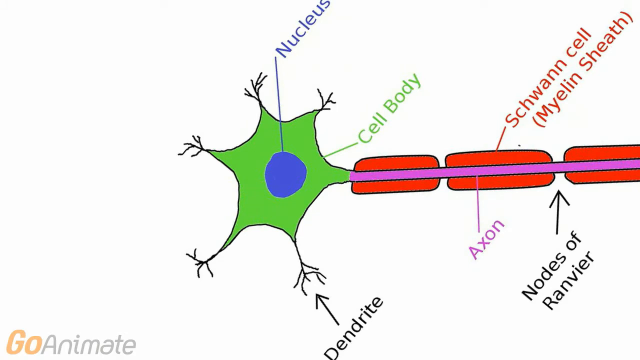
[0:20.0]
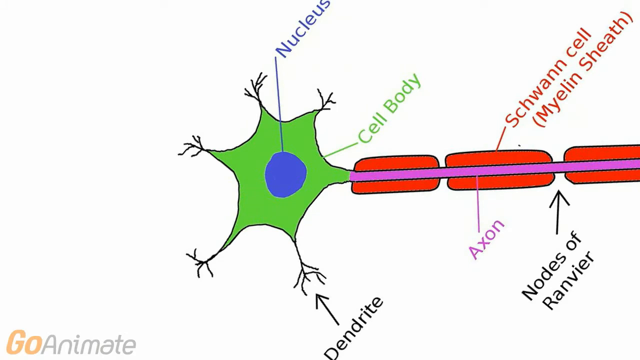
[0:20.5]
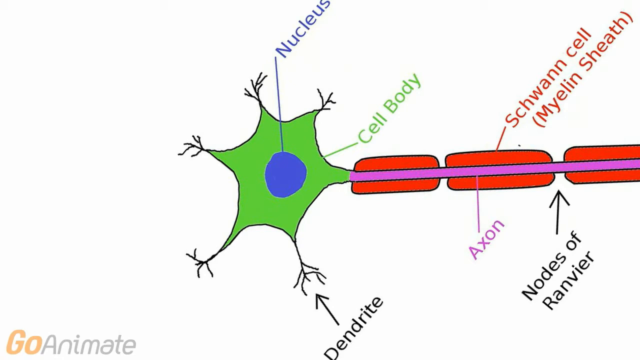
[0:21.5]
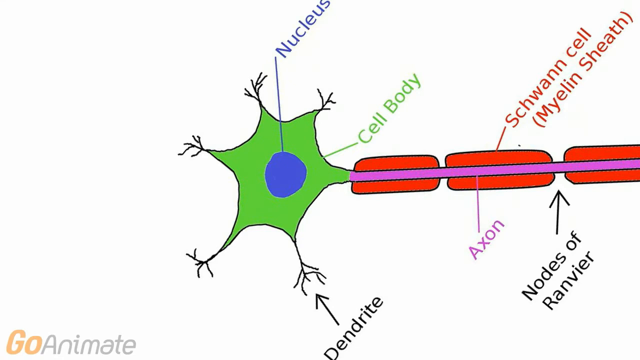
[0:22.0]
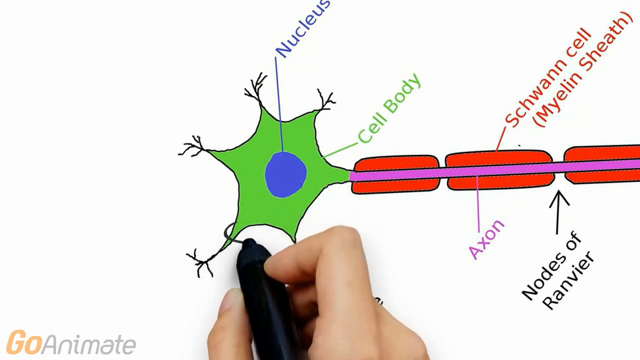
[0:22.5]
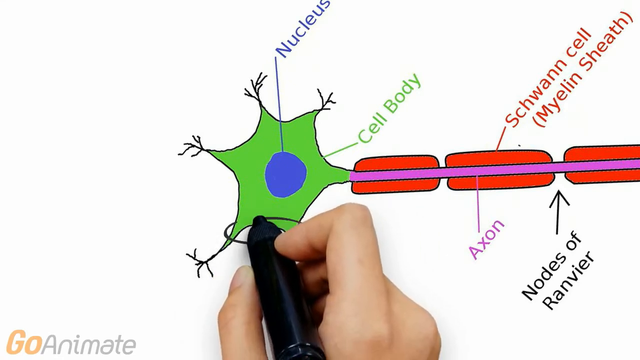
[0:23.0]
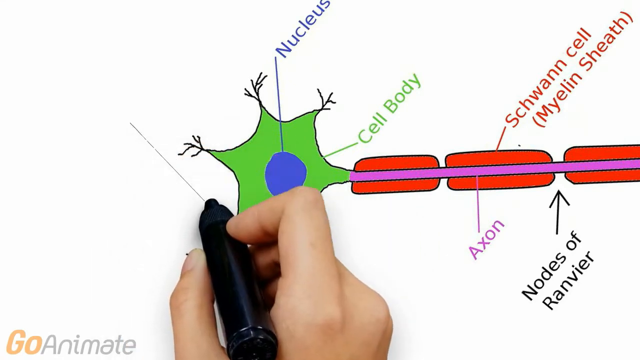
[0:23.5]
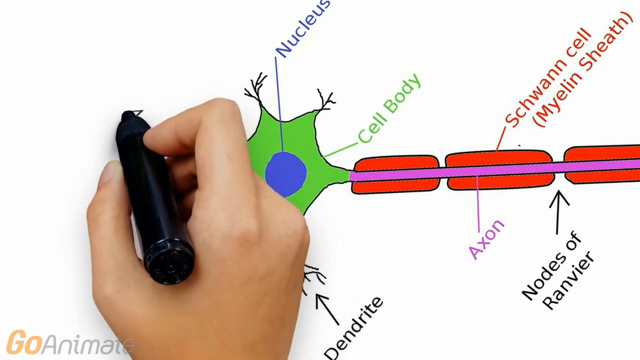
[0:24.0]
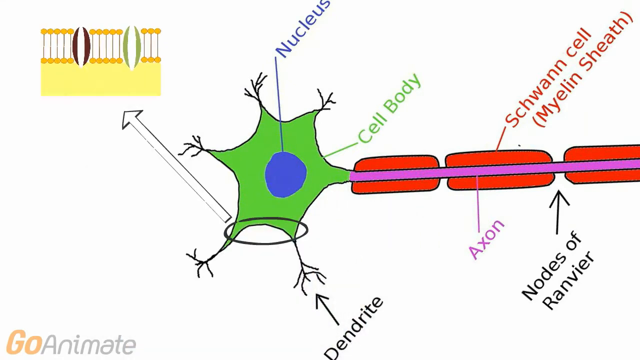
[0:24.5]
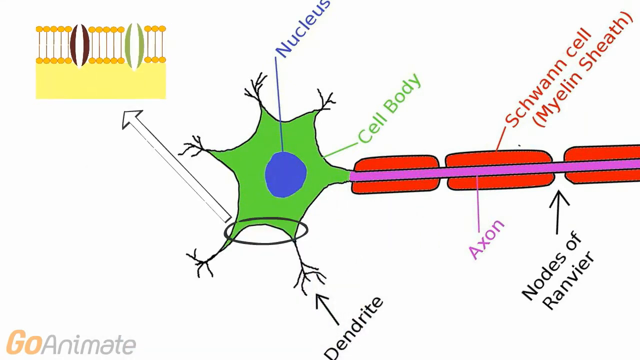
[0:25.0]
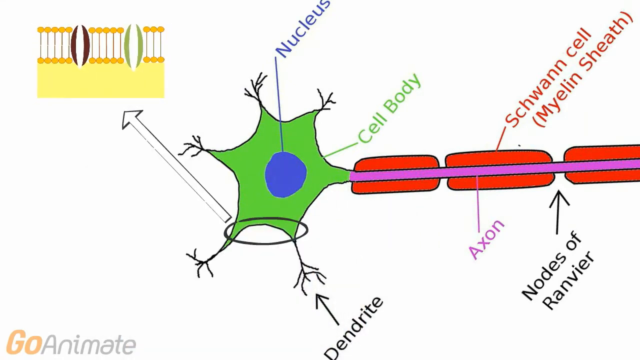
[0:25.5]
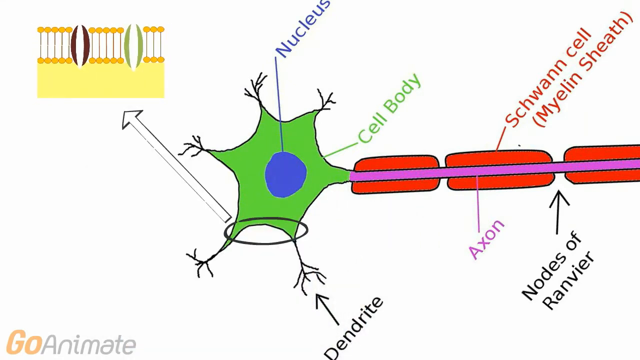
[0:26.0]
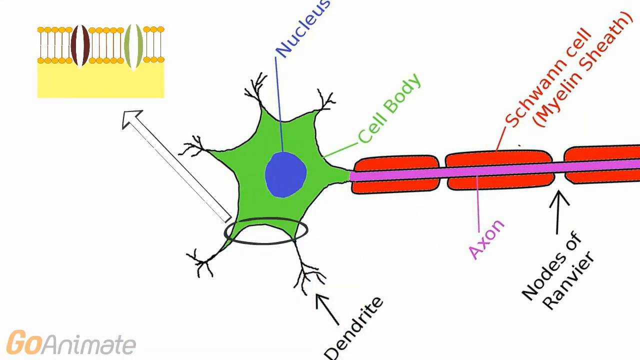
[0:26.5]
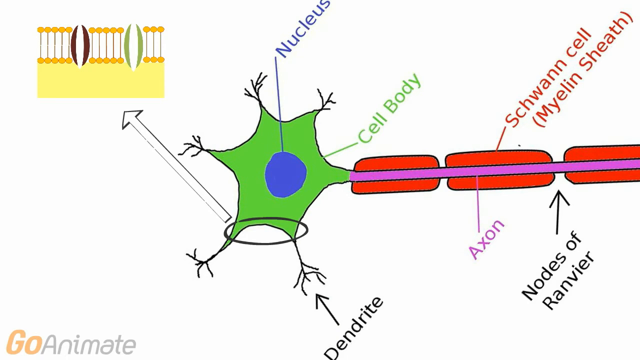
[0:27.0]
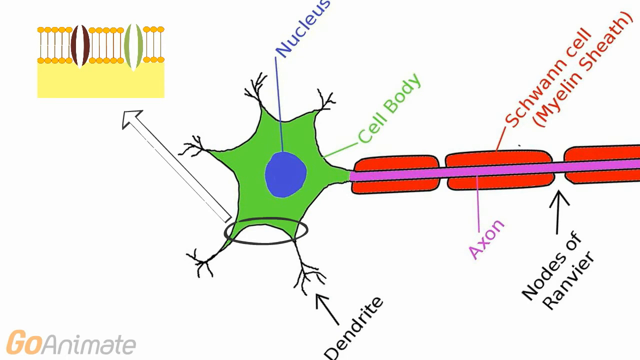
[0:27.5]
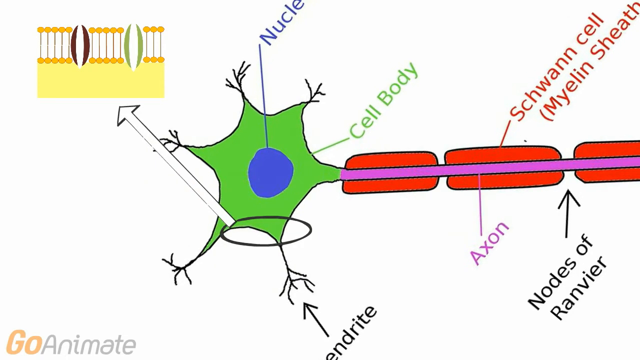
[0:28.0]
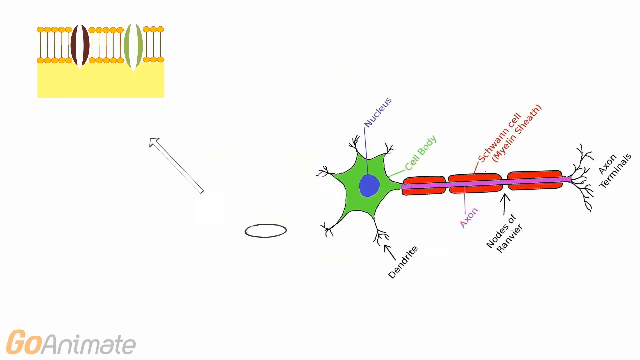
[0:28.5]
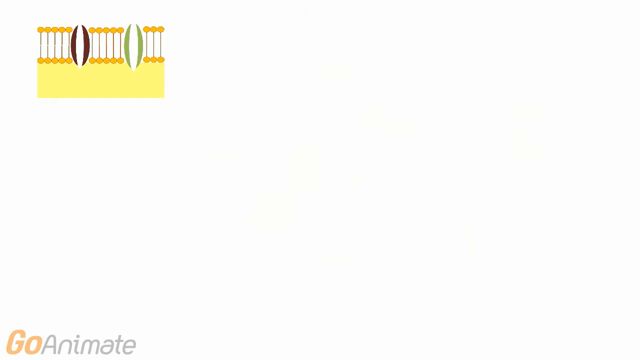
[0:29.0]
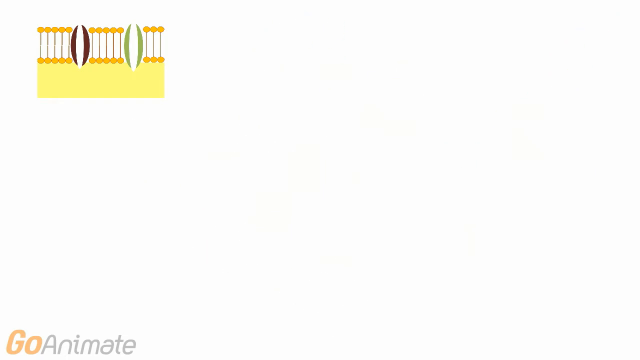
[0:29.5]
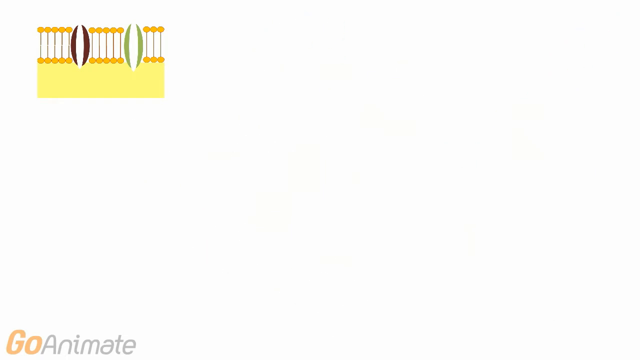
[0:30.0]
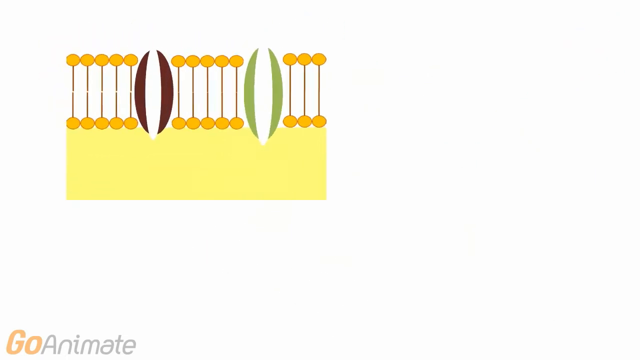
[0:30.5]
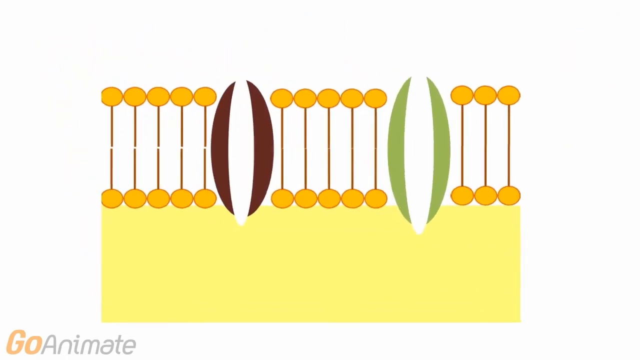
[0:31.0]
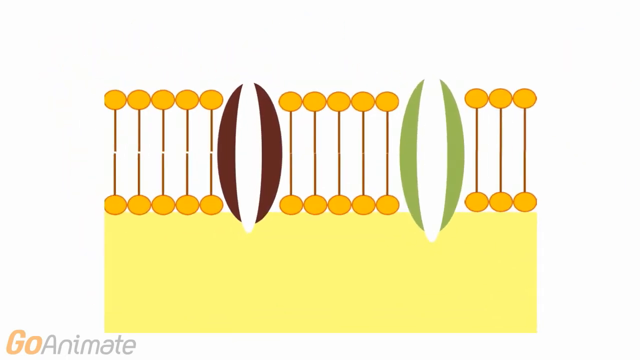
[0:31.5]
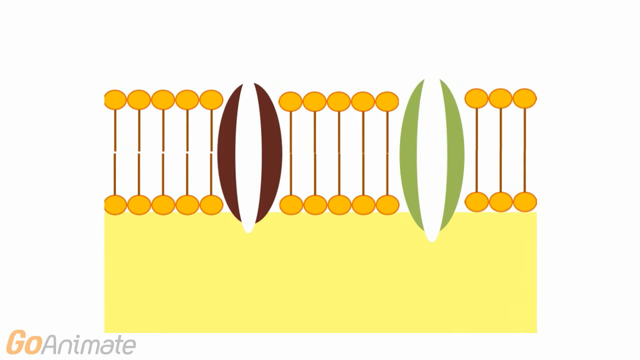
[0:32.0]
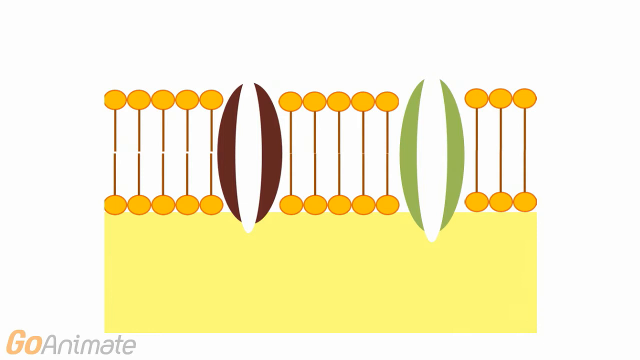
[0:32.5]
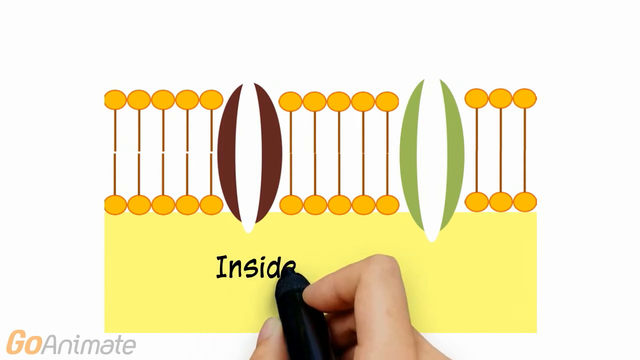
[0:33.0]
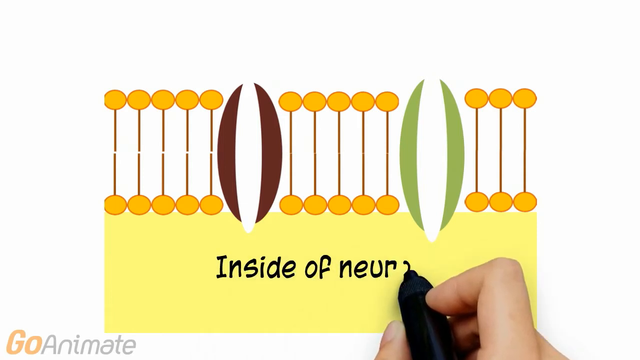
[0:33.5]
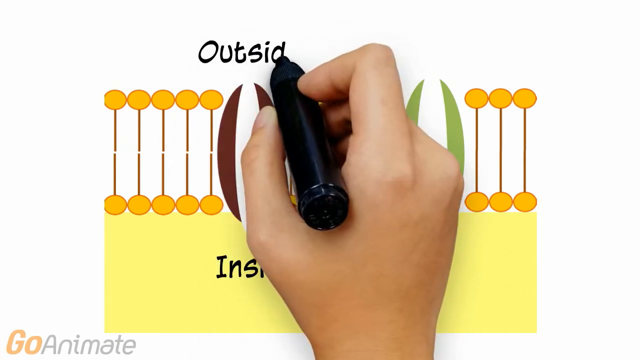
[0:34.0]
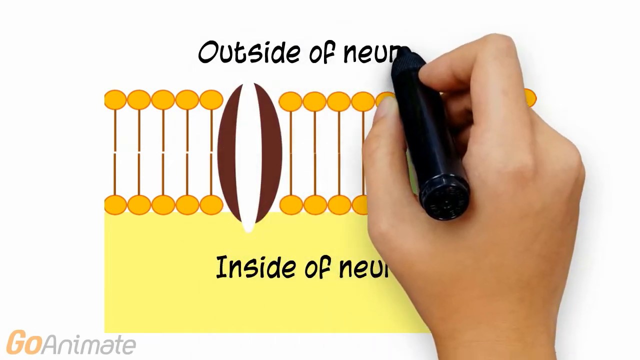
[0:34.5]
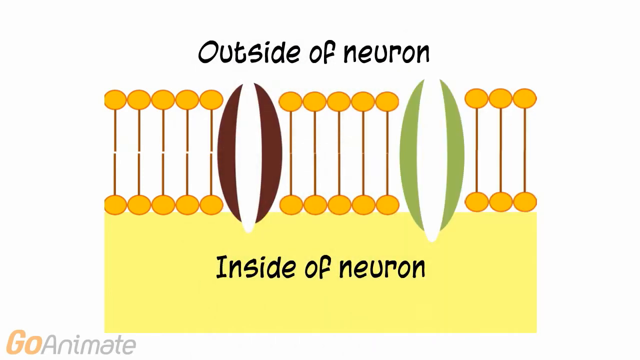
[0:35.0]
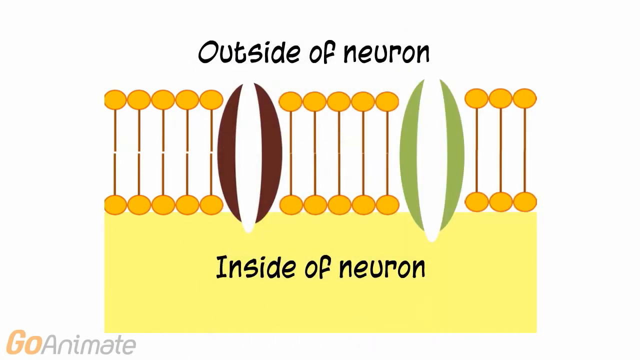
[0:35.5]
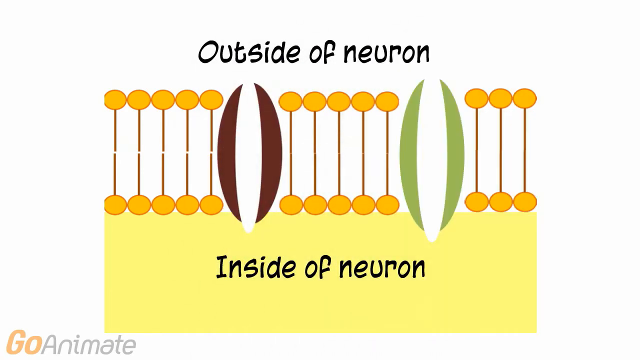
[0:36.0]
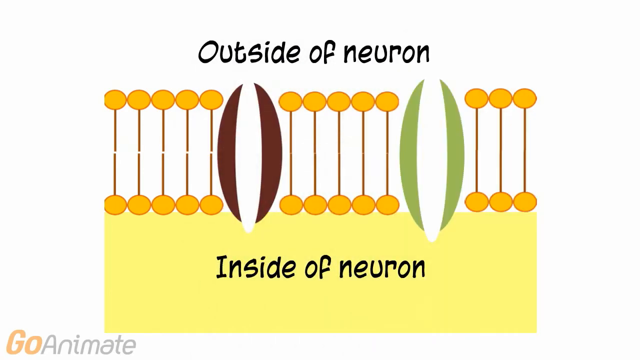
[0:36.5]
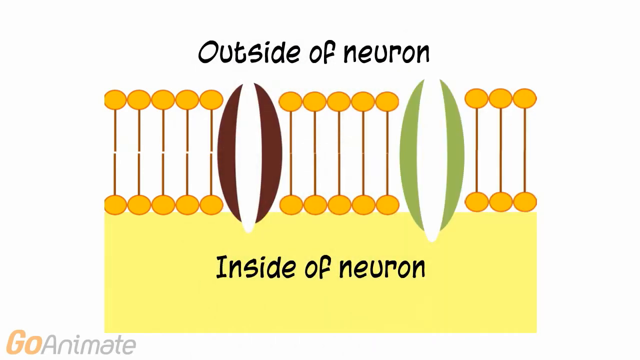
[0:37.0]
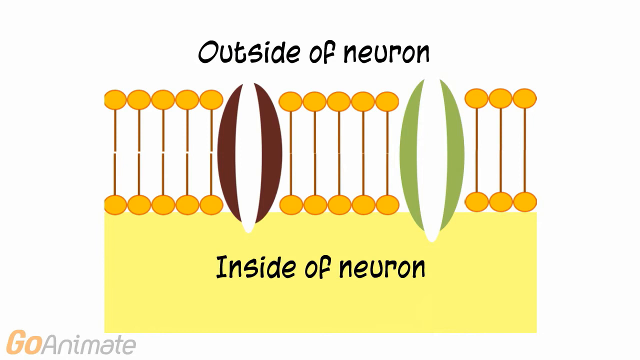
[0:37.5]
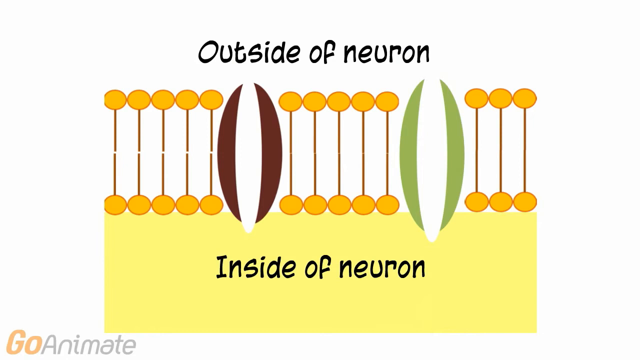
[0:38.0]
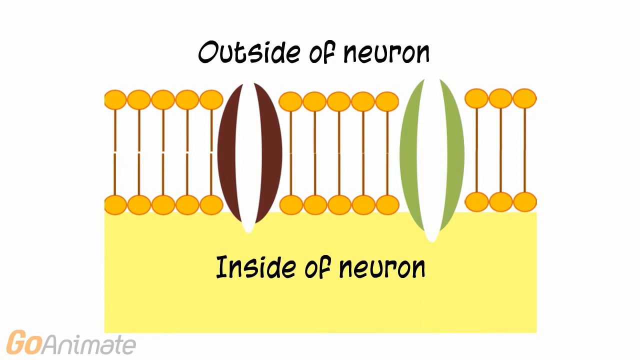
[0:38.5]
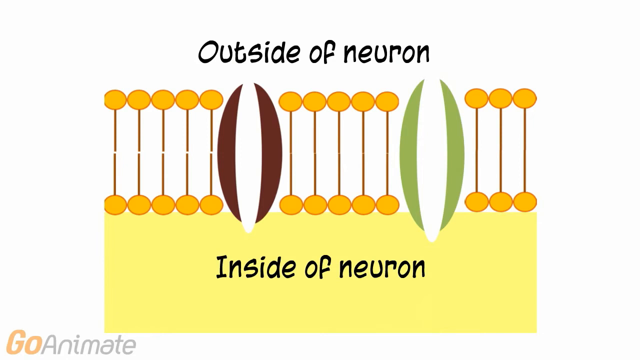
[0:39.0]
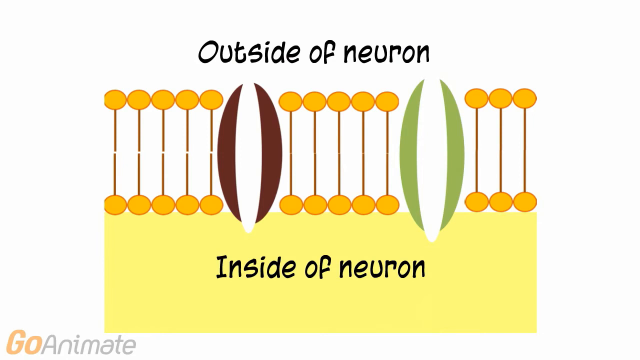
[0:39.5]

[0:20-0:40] A partial drawing of a neuron appears against a white background: a green, star-shaped cell body with a round blue nucleus inside, a purple axon line running down from it, and three red oval attachments on the axon, the Schwann cell myelin sheath, with the nodes of Ranvier in the spaces between them. Hairs coming off the cell body are the dendrites. The hand reappears holding a black marker, circles two of the dendrites, and draws an arrow up to another drawing. This drawing has a long yellow rectangle at the bottom, and on top of it, oriented vertically, are two sets of five lines and one set of three lines with orange ovals at their ends. Between the first set of five and the second set of five are two parentheses-shaped objects, one brown and one green. The hand writes "inside of neuron" in the yellow area and "outside of neuron" above the drawing.